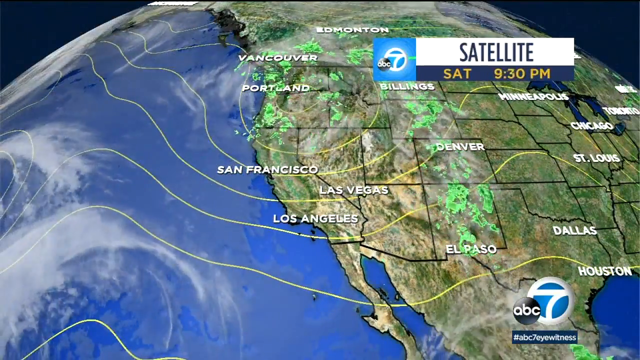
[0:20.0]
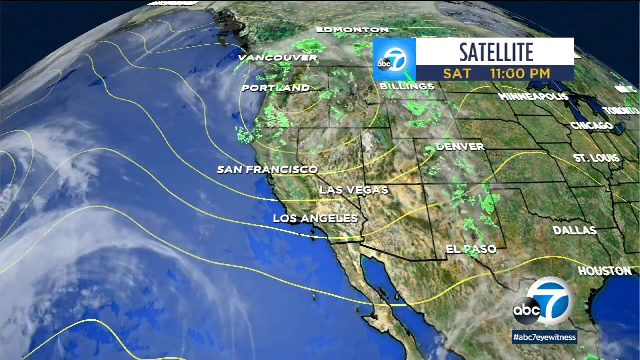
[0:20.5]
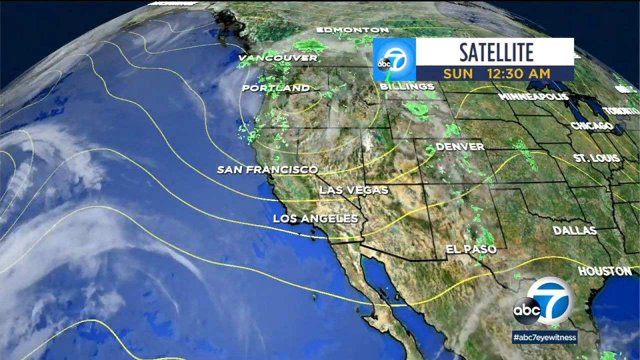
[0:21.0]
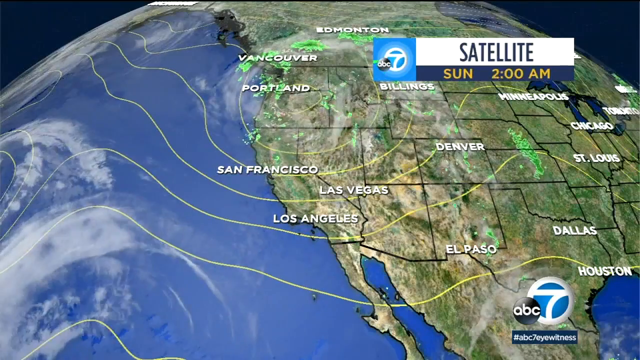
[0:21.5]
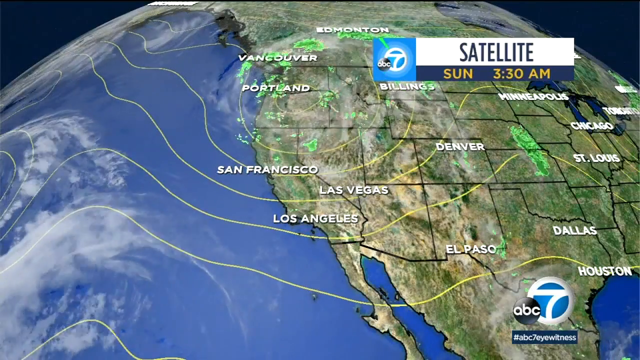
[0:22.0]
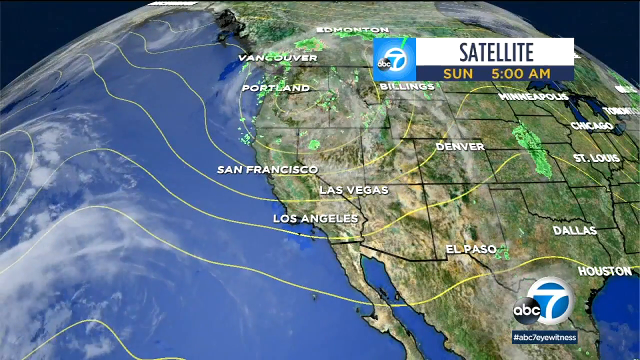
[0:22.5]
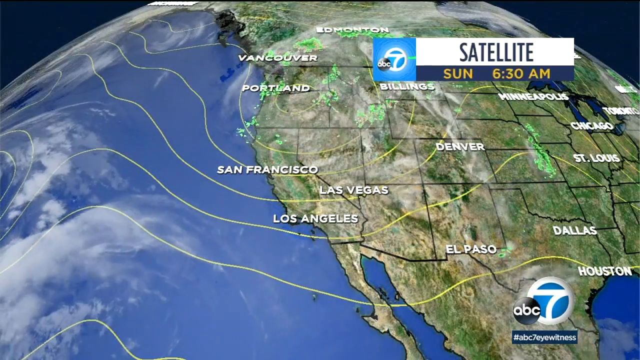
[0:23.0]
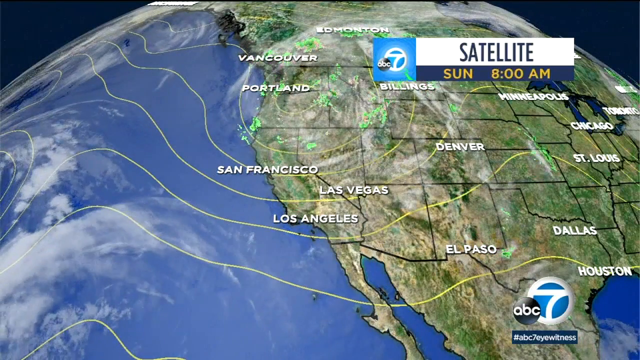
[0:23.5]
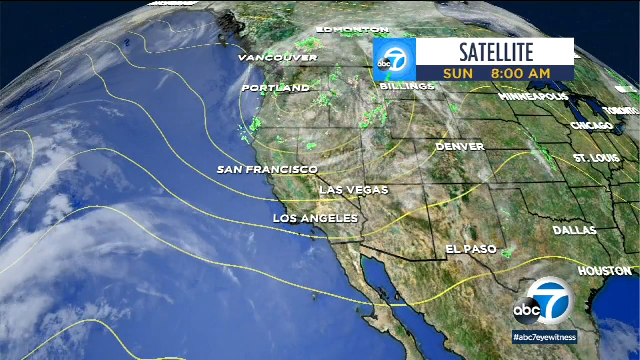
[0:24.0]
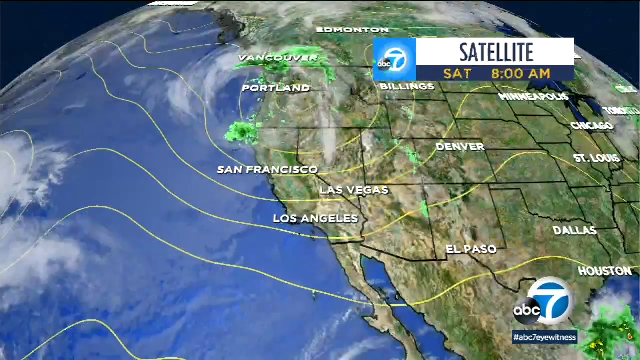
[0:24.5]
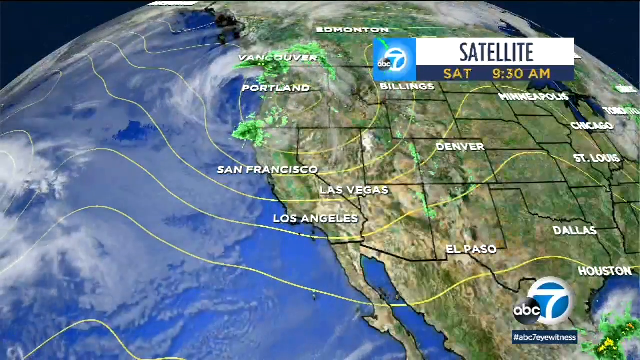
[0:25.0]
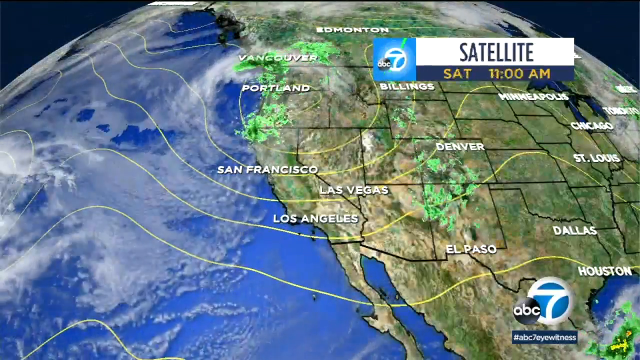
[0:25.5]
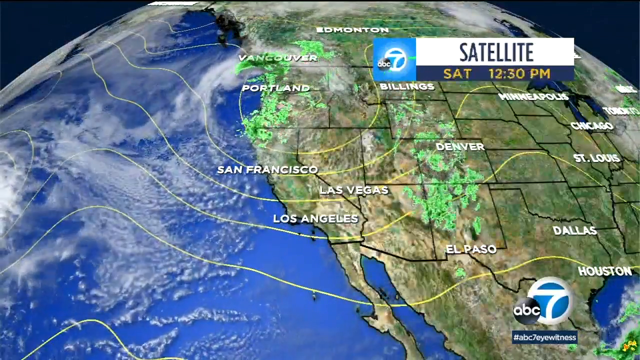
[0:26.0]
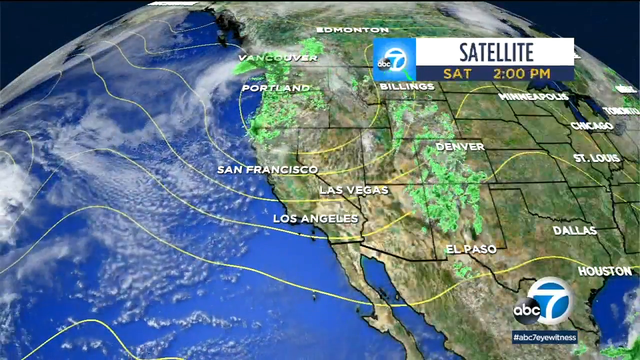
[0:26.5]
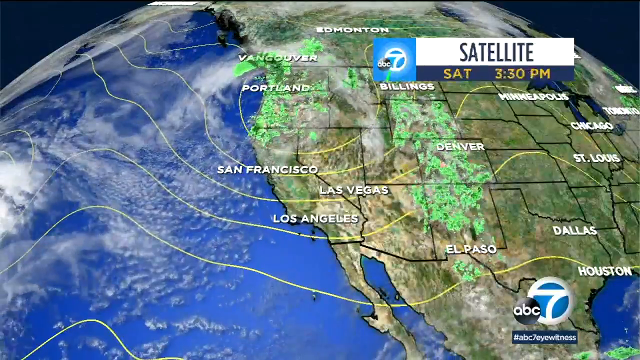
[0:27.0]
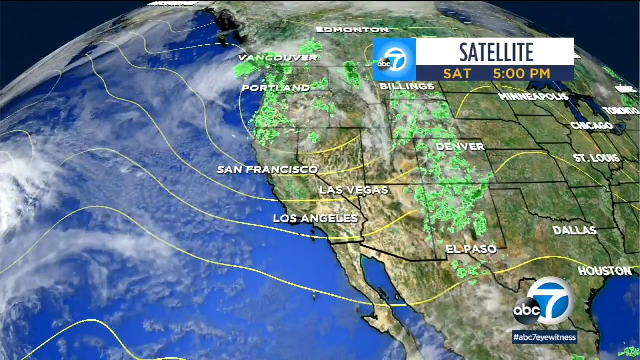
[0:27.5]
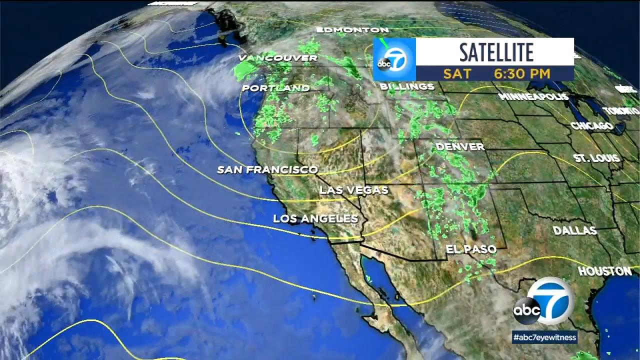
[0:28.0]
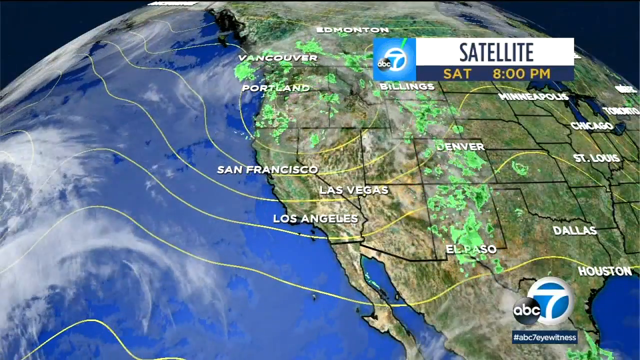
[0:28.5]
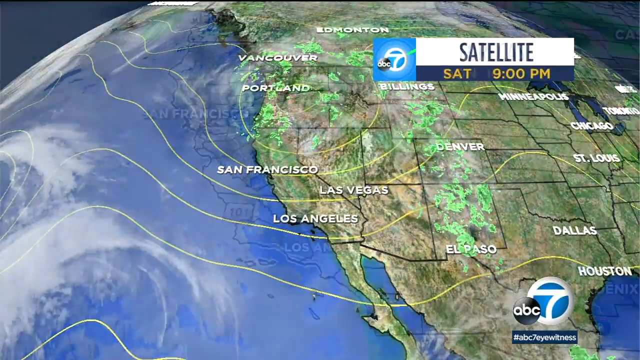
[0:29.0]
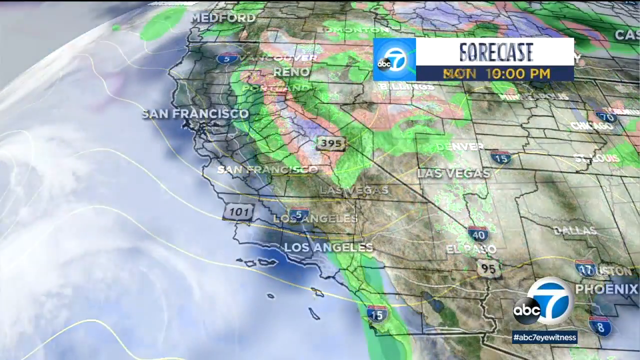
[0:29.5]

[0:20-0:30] The satellite map continues, labelled "Satellite Saturday 9:30 p.m.", with cities including Edmonton, Vancouver, Portland, Billings, San Francisco, Denver, Las Vegas, Dallas, Houston, St. Louis, Chicago, Toronto and Minneapolis. Jonathan Novak presents the forecast for these places. Another map is shown briefly, and the time display advances quickly from Saturday 9:30 p.m. through Sunday to Monday.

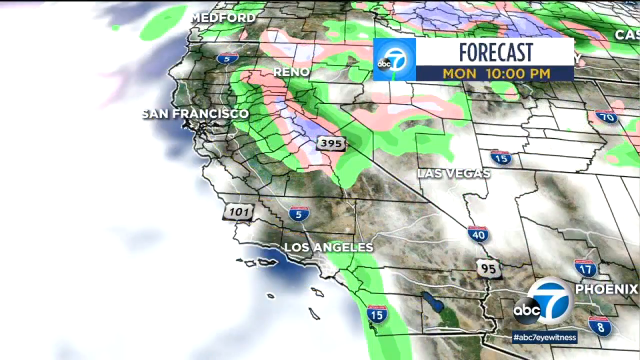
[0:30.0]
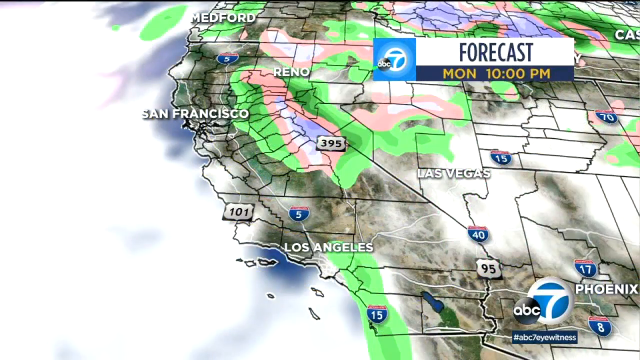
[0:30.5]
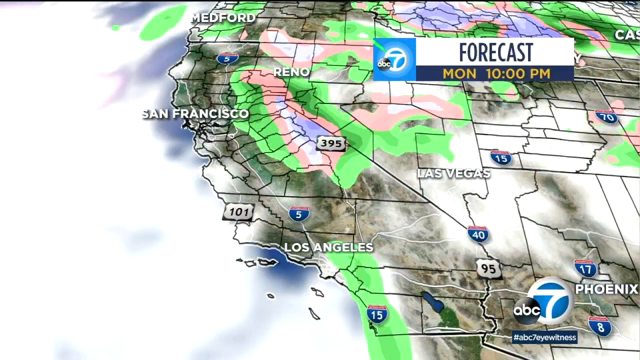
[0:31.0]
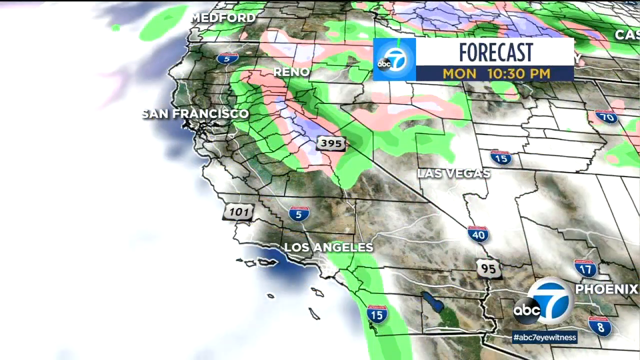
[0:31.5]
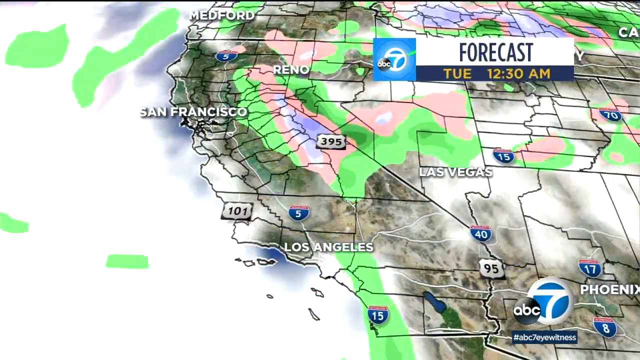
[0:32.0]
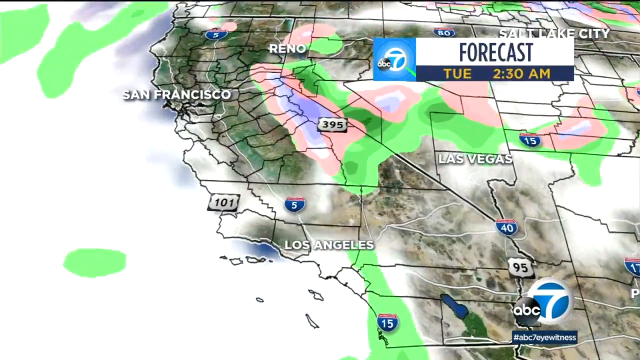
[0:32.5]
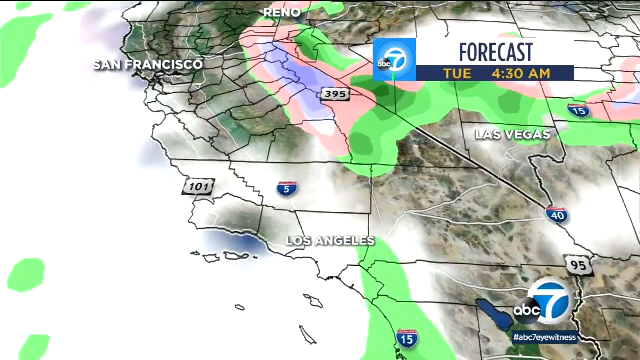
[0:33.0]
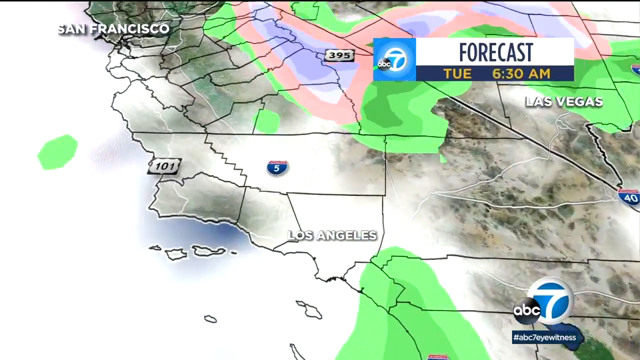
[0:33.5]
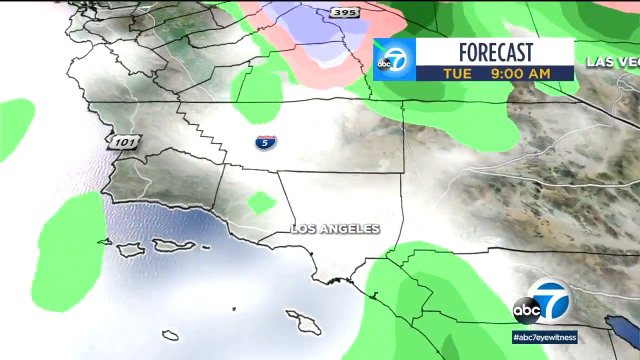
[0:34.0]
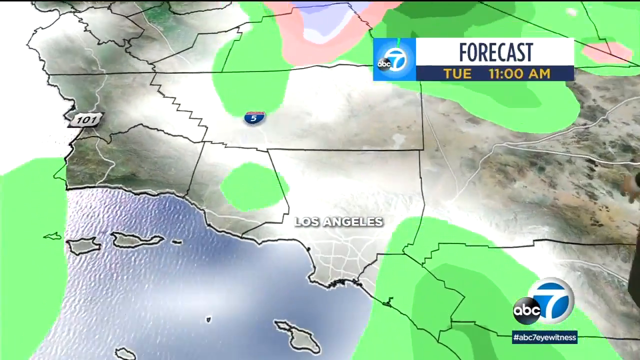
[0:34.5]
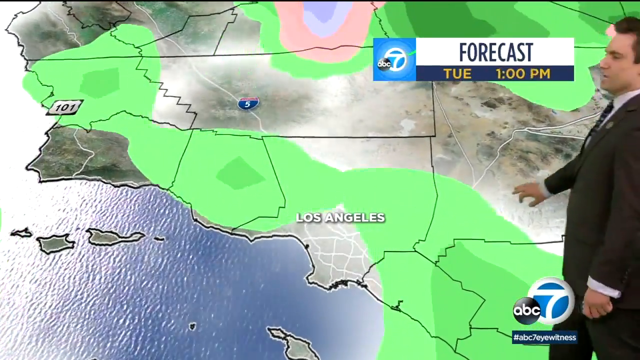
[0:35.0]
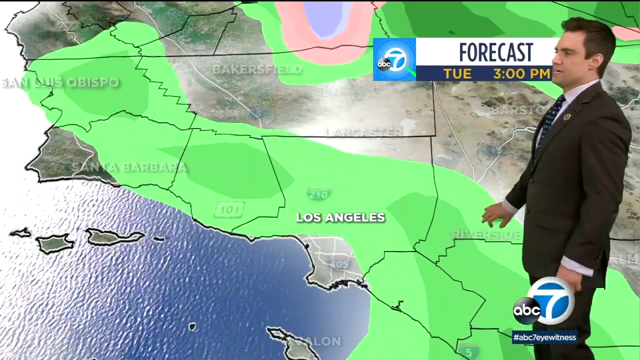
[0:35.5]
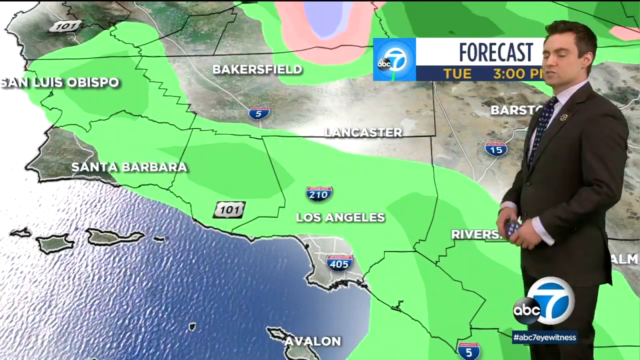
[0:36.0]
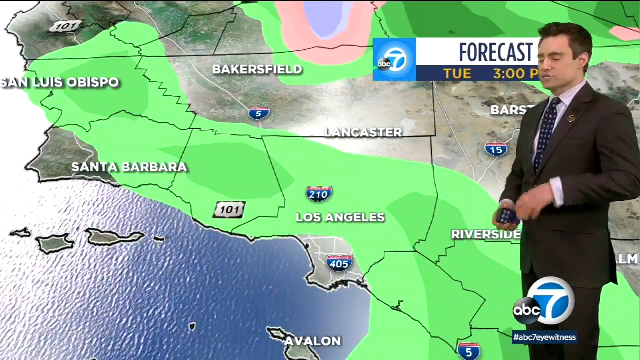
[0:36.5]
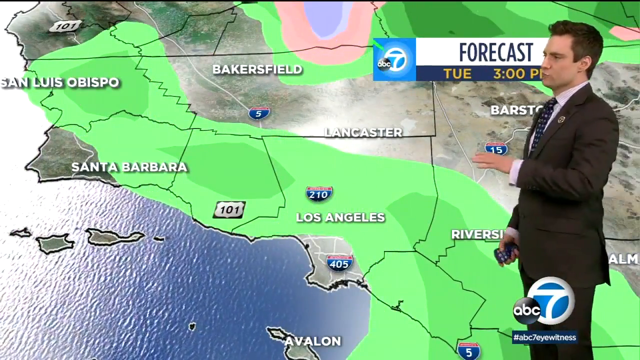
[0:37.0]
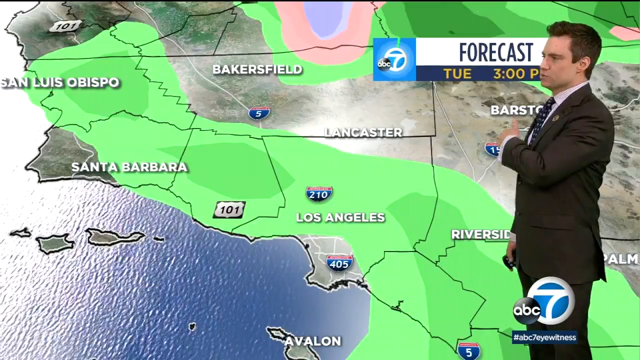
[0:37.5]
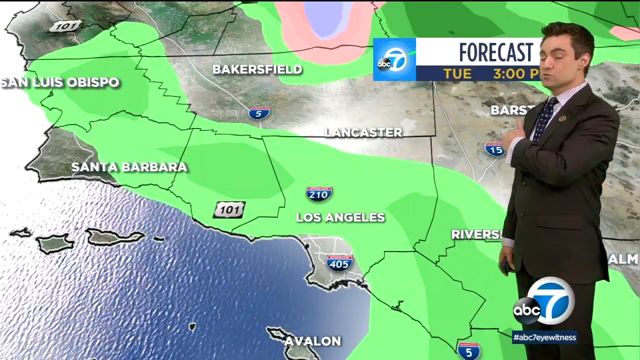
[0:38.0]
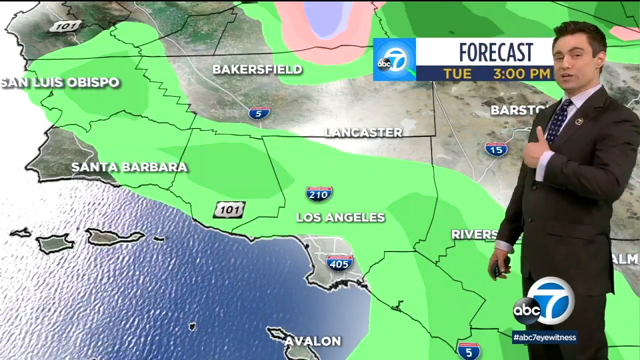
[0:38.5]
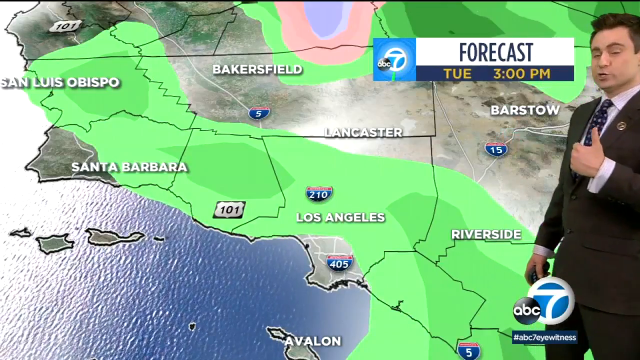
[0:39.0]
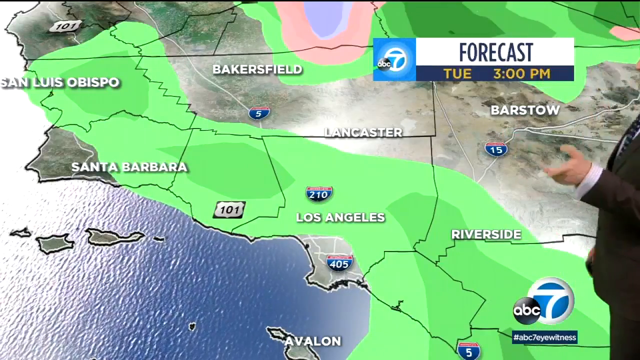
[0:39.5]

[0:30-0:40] A map reads "Forecast Monday 10 p.m." and shows San Luis Obispo, Bakersfield, Santa Barbara, Lancaster, Los Angeles and Riverside. Jonathan Novak, wearing a black suit and a navy blue tie, with his hair well laid, gestures with his left hand toward the map. The time moves quickly from Monday 10 p.m. to Tuesday 3 p.m., when he appears gesturing with his left hand at the map again. New cities appear: Medford, Reno, San Francisco, Las Vegas, Los Angeles and Phoenix, along with numbers on the map such as 101, 395, 15, 95, 17, 70 and 40.